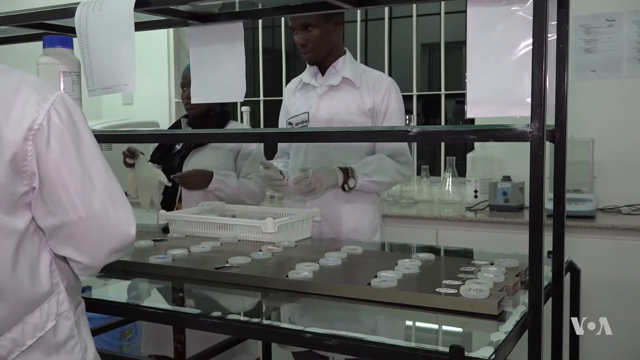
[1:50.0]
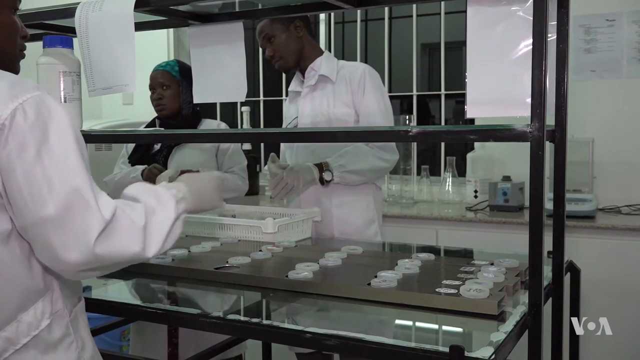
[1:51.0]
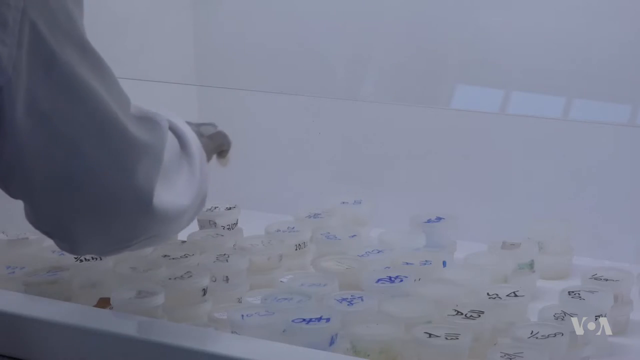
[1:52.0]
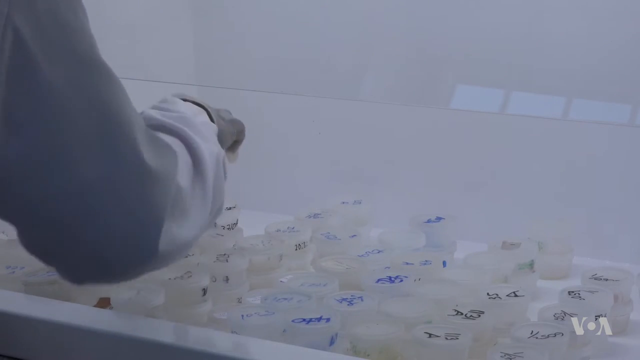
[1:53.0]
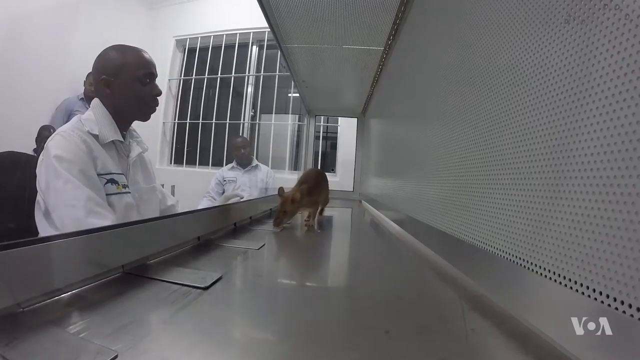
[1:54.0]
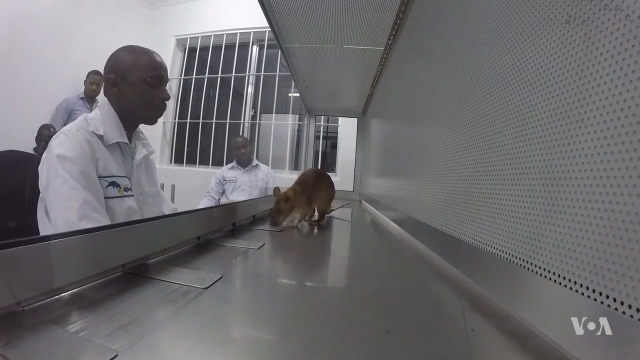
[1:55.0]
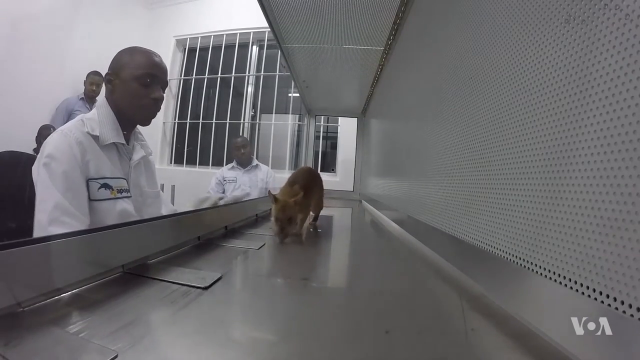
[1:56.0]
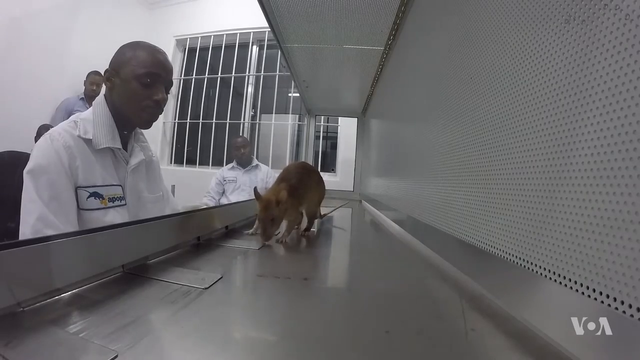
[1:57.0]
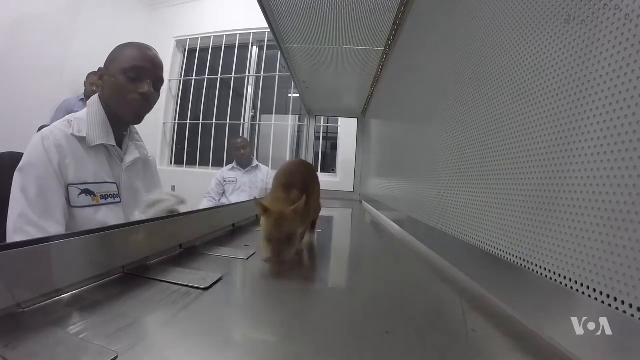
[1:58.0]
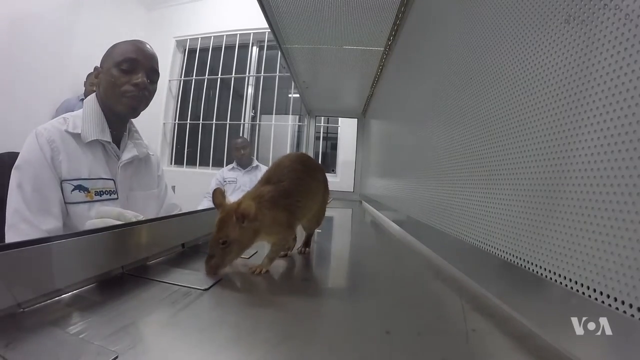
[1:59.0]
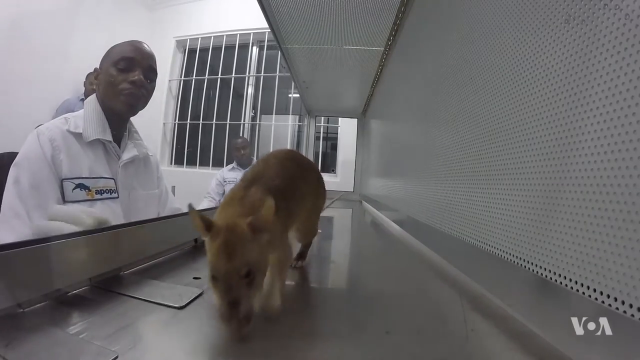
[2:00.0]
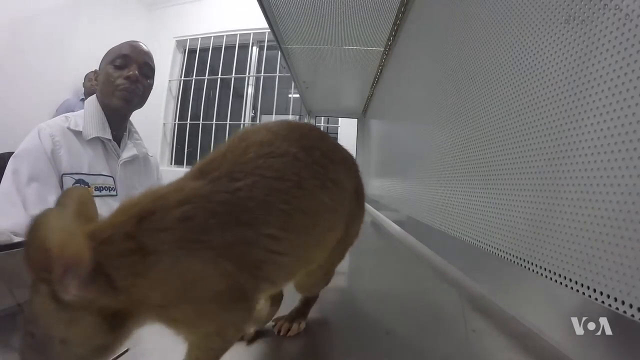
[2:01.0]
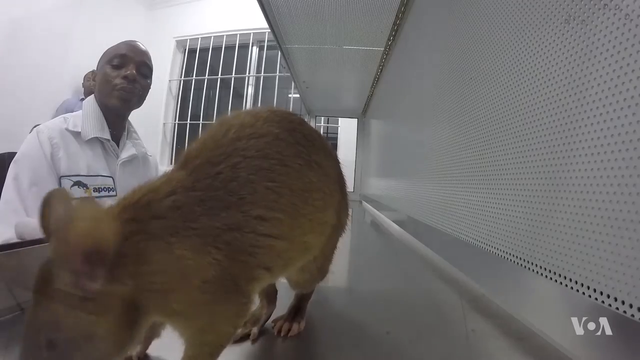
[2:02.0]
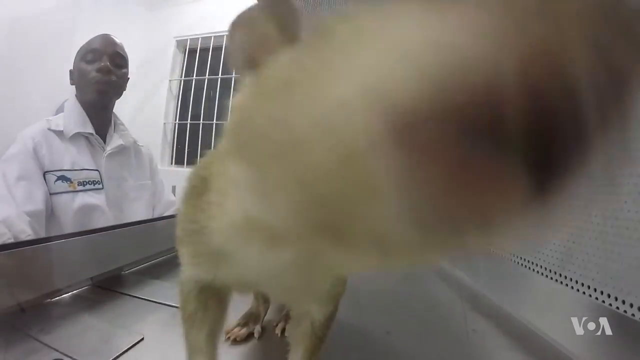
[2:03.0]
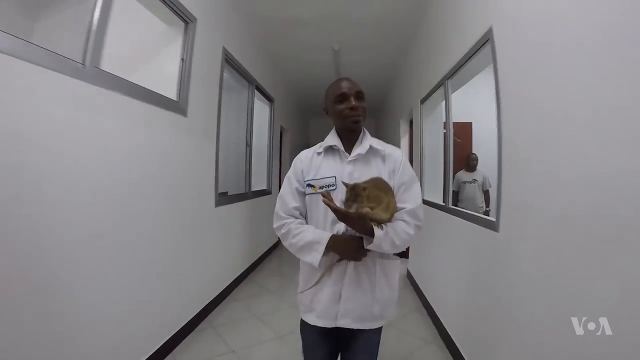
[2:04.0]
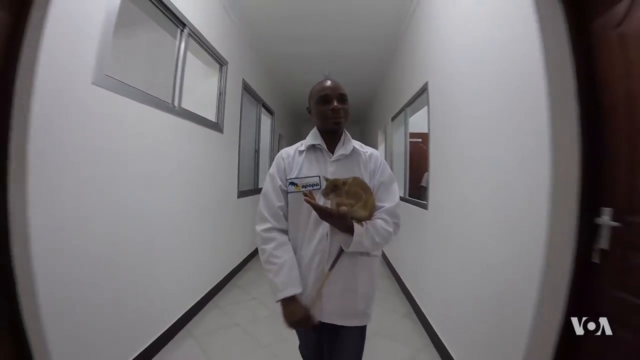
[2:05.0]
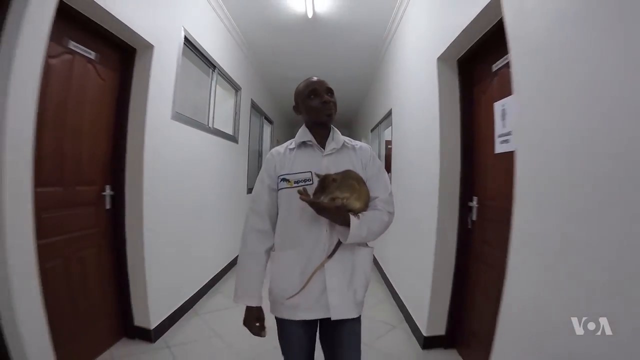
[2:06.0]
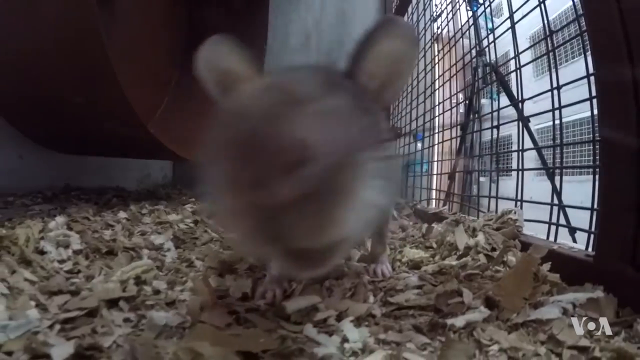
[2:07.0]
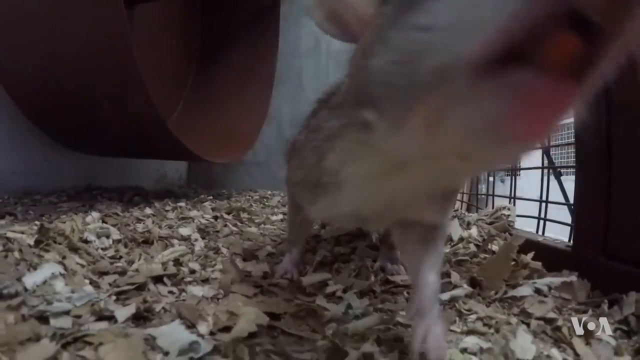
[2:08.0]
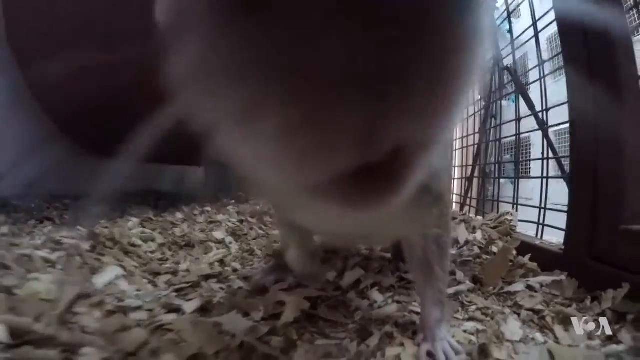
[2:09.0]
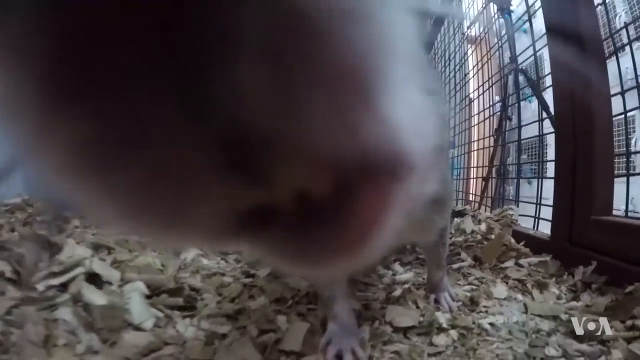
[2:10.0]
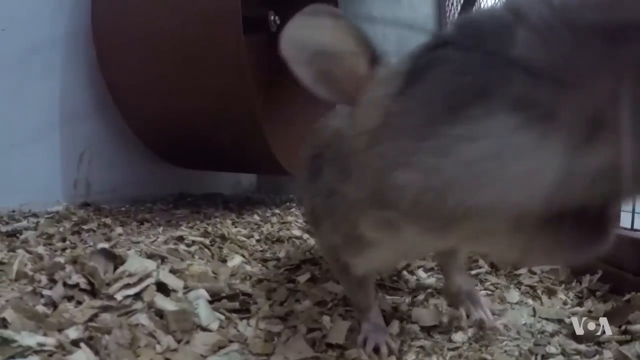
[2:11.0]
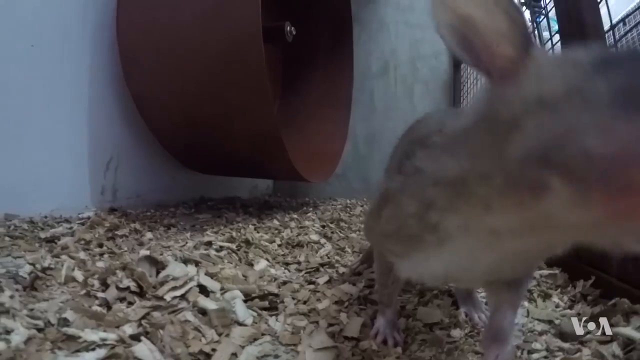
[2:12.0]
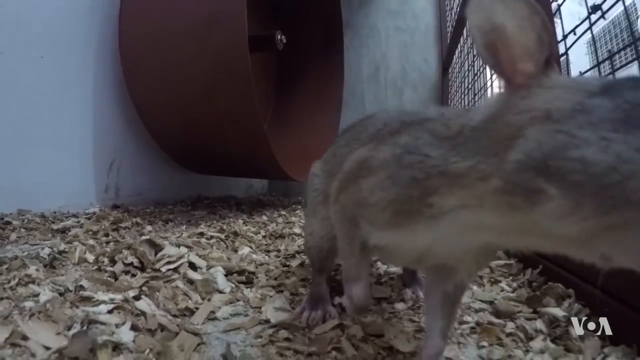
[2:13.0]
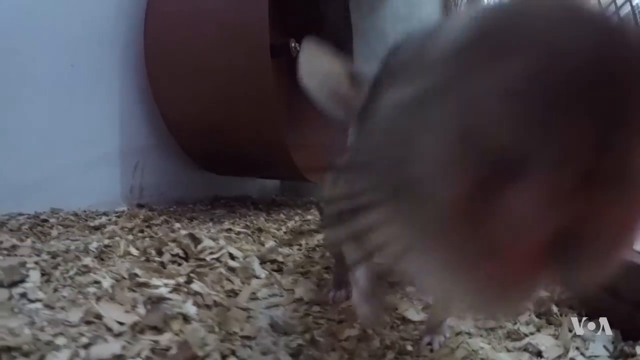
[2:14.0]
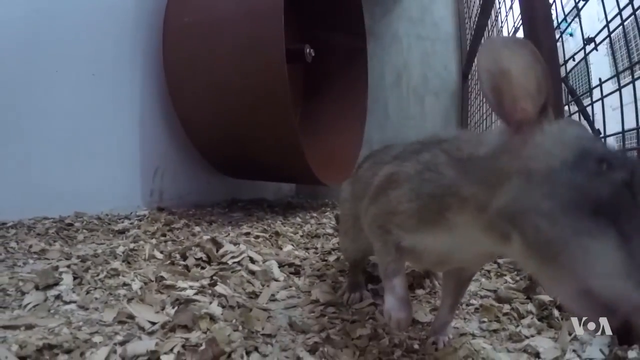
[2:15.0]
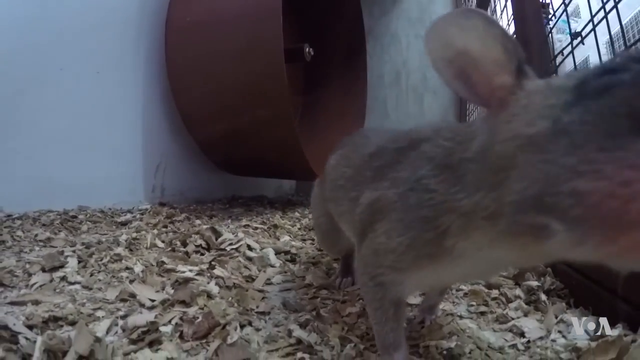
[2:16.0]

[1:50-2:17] More footage shows people putting things into bottles. The video then cuts back to footage like the opening, with a rat crawling around and looking at its surroundings, but this is a different rat: brown rather than gray, and it looks a little thinner than the first. From this perspective, the man on the outside watching the rat moves little panels around to interact with it. A scientist then carries one of the bigger rats cradled in his left arm as they walk around, apparently taking it back to the cage. At the end, a rat sniffs the camera very close up; this is inside the cage, with lots of wood chips on the ground and a hamster wheel in the back left corner.